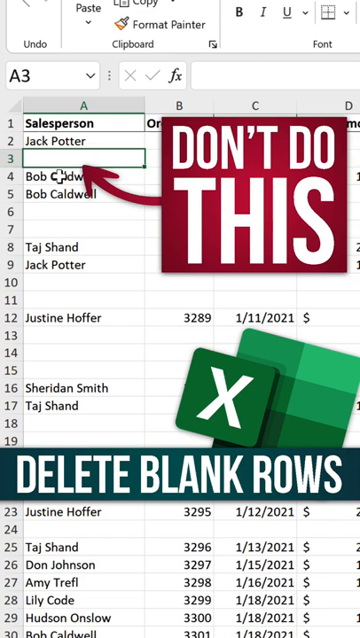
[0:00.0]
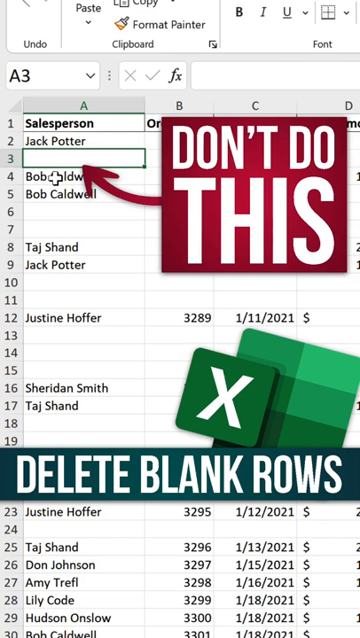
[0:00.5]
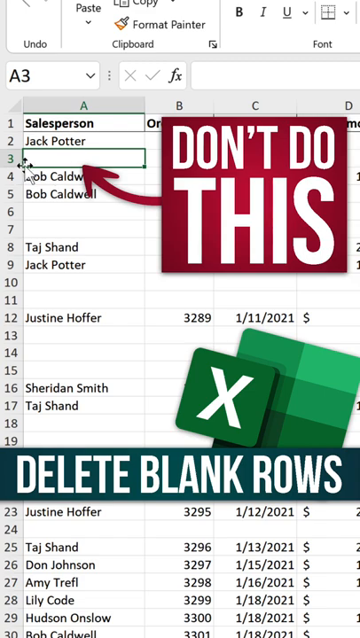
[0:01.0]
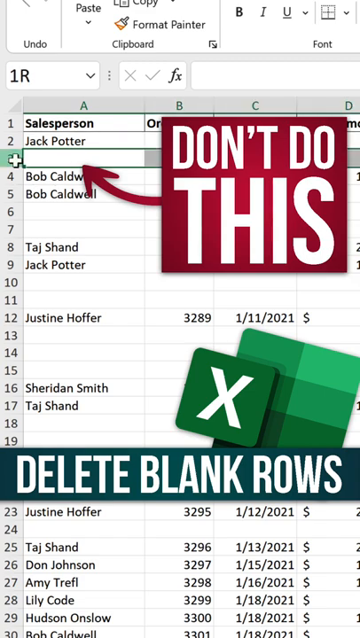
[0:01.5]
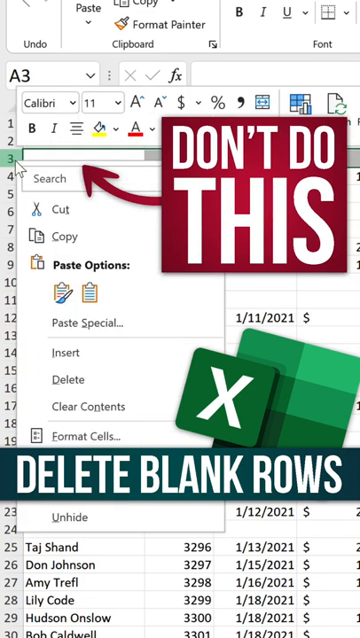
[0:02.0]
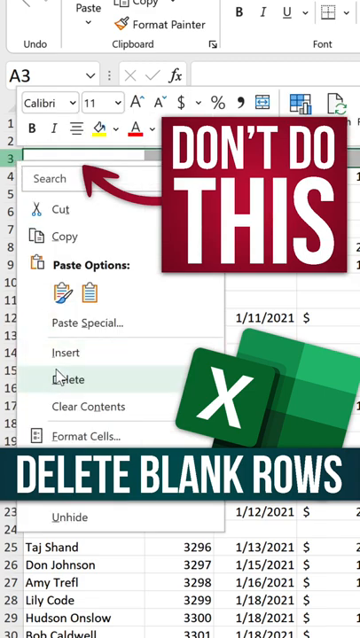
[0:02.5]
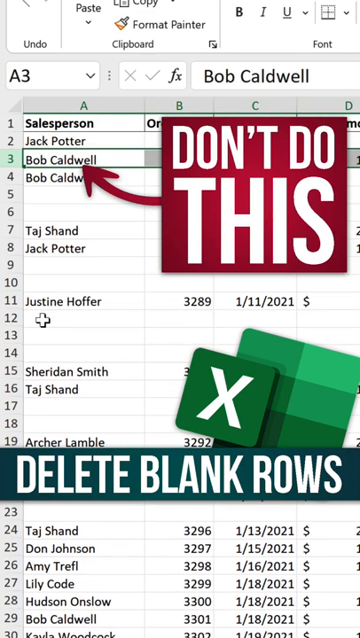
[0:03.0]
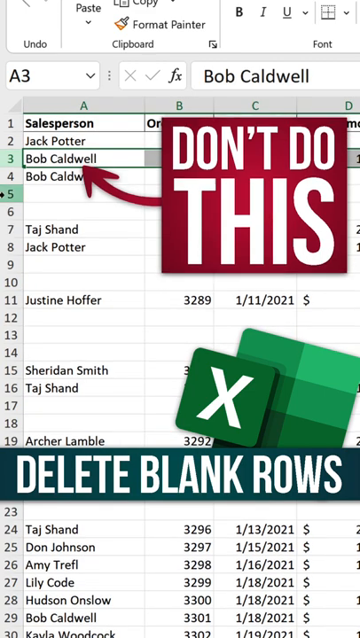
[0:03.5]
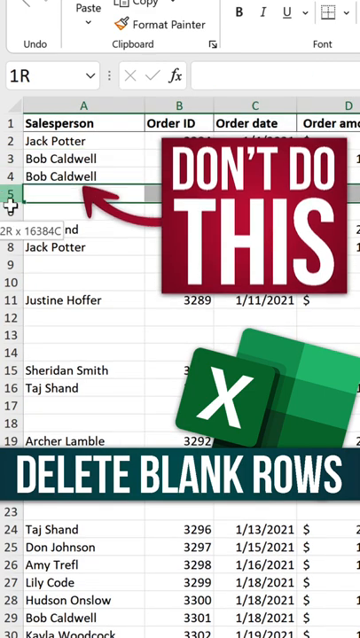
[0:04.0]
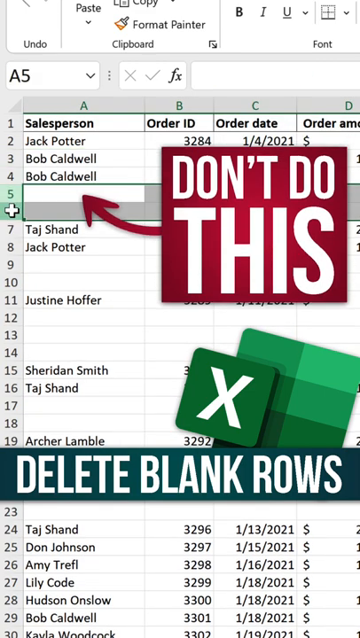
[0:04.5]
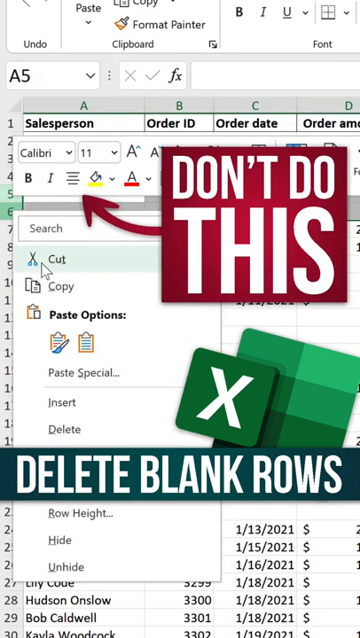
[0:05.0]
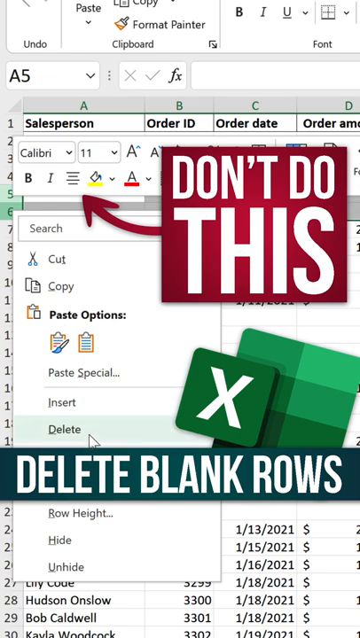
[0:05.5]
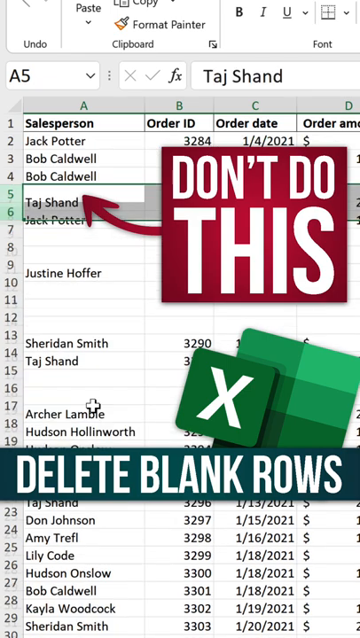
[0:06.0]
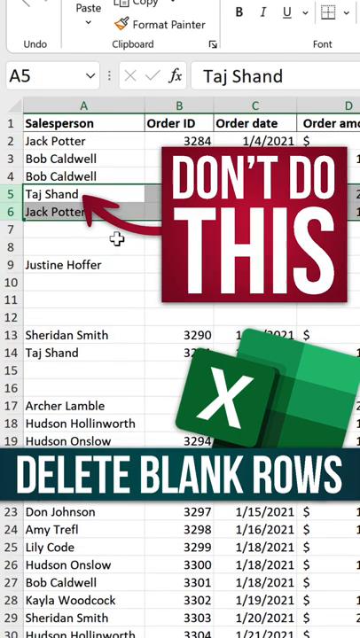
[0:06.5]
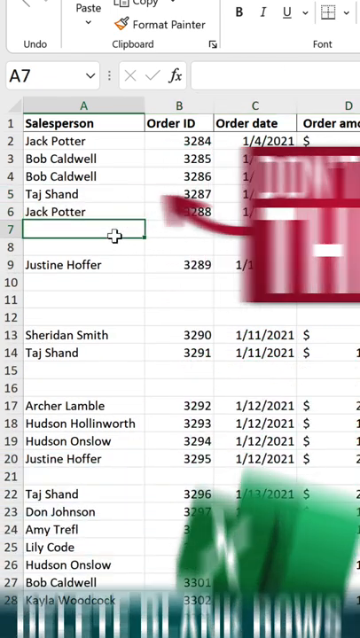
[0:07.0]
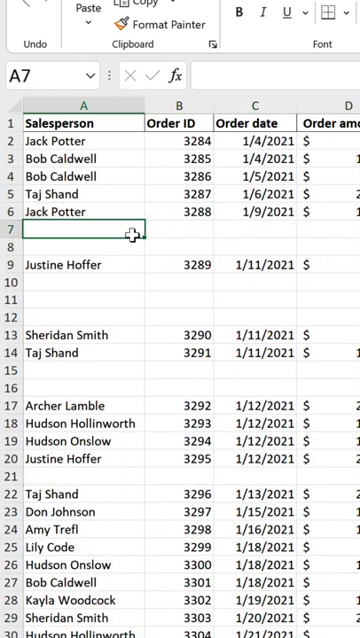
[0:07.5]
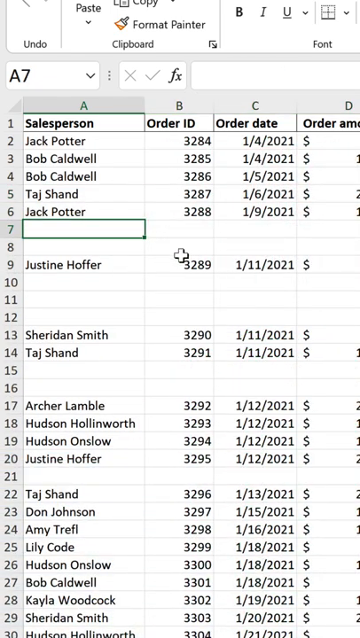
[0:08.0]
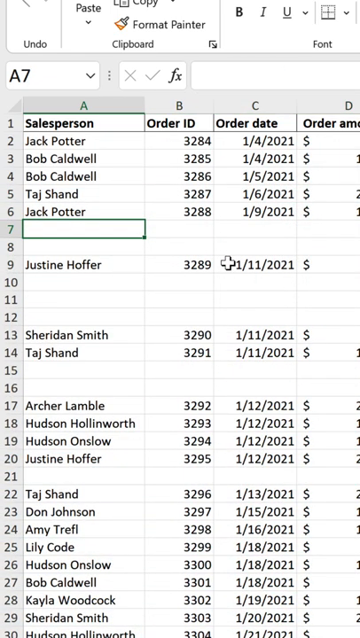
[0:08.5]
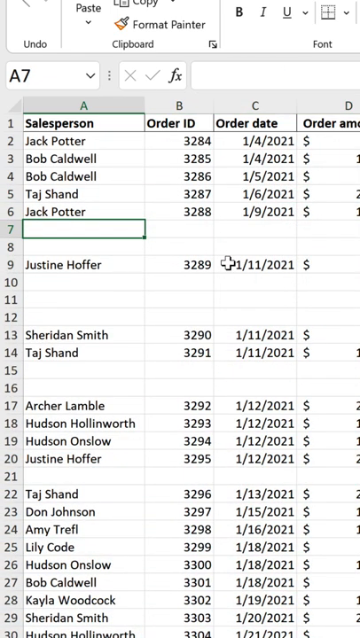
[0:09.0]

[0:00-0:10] Part of a DIY video for the program Microsoft Excel shows a spreadsheet in a vertical view from a mobile phone. A large red square contains the text "don't do this" in all capital letters and a very large font, and an arrow attached to the red box points to cell A3 on the spreadsheet. Toward the bottom middle of the video is a logo of the Microsoft Excel program along with a title line that says "delete blank rows". Column A contains names, column B contains numbers in order, column C contains a date, and column D contains a money symbol and numbers. The person then deletes the entire third row, as well as rows five and six, which were empty.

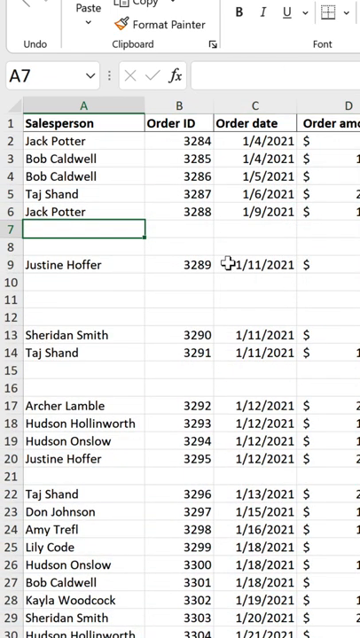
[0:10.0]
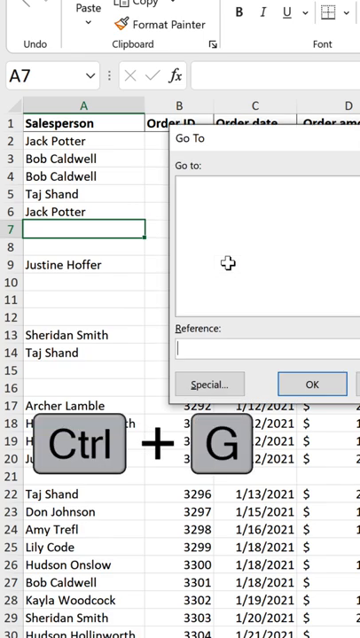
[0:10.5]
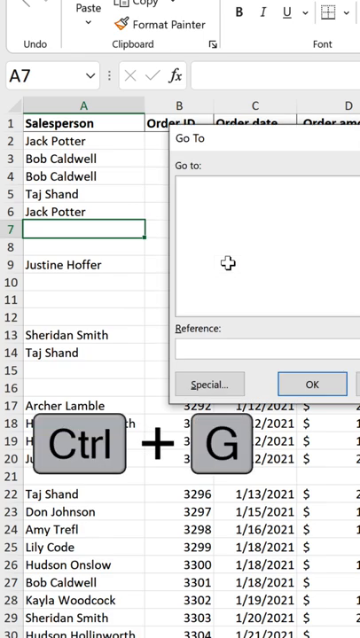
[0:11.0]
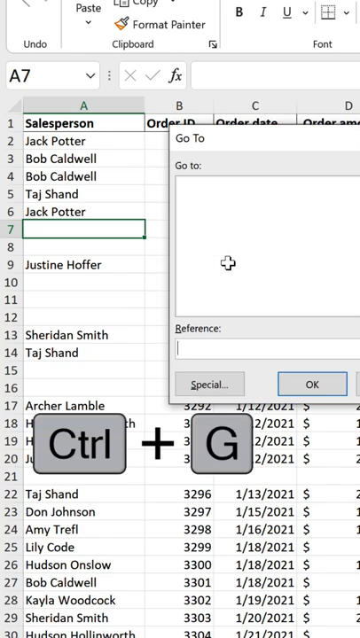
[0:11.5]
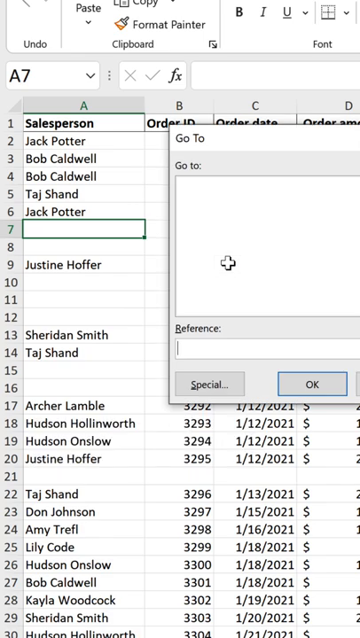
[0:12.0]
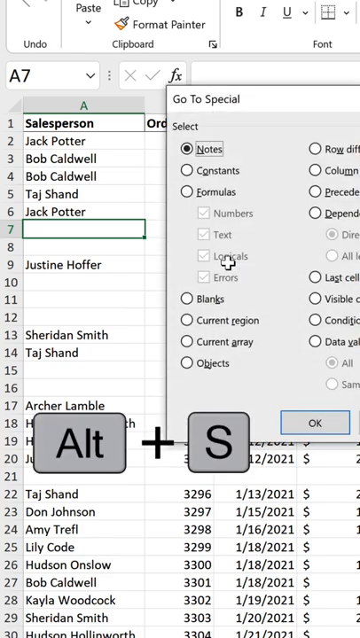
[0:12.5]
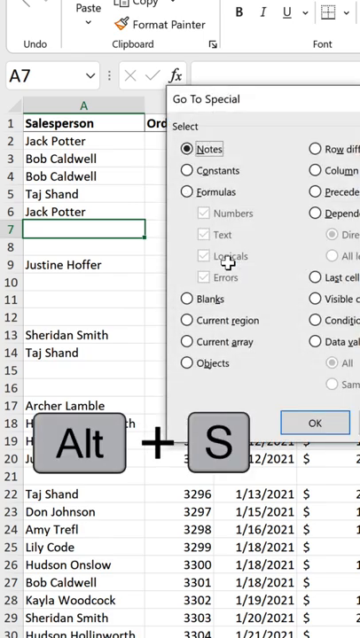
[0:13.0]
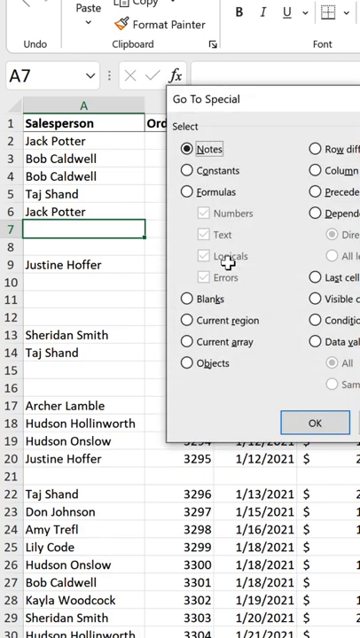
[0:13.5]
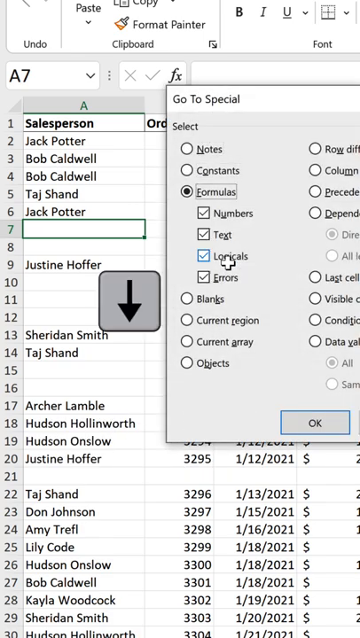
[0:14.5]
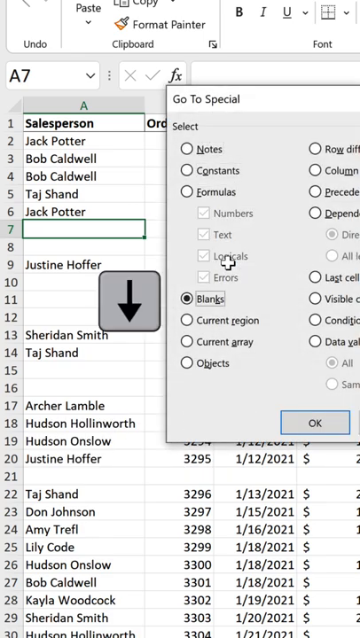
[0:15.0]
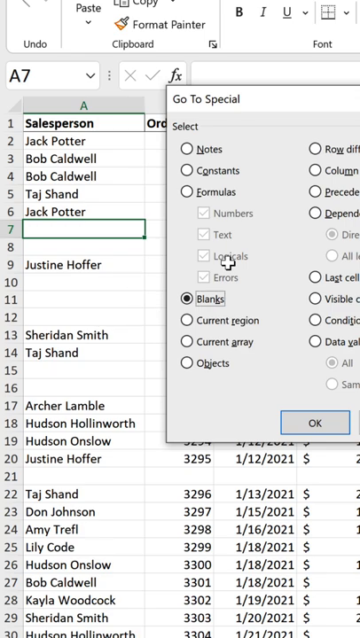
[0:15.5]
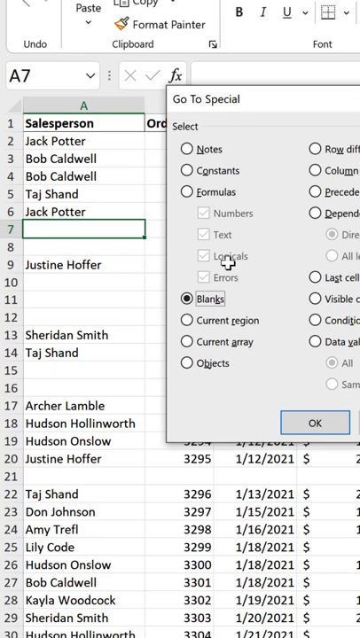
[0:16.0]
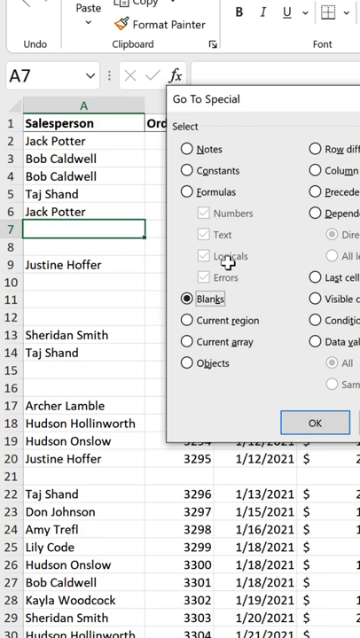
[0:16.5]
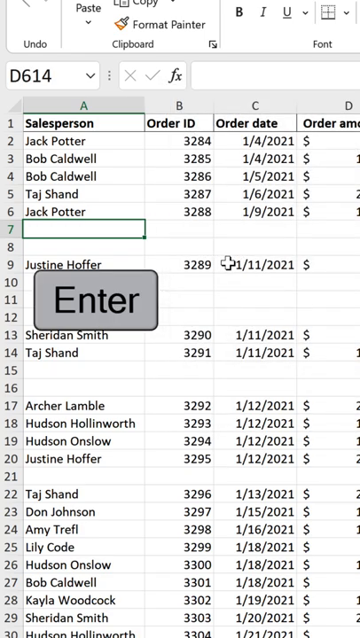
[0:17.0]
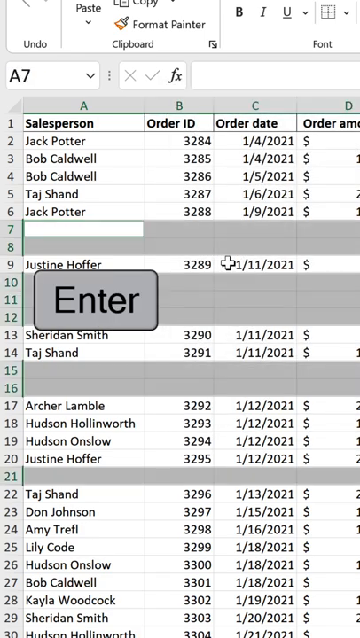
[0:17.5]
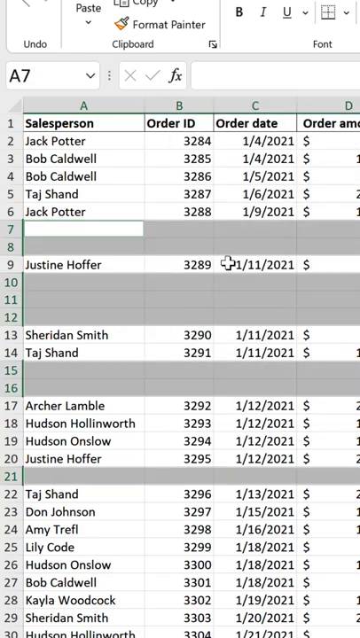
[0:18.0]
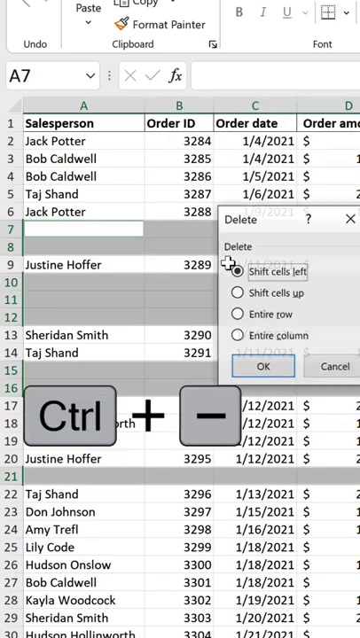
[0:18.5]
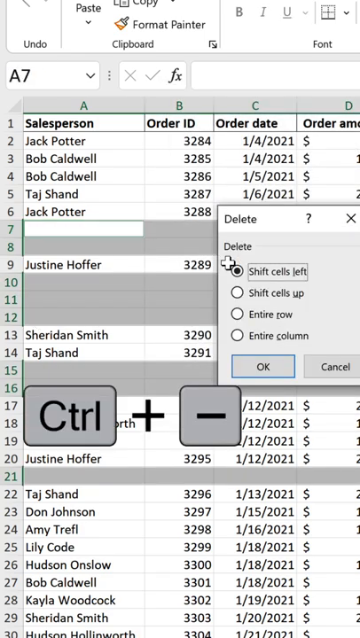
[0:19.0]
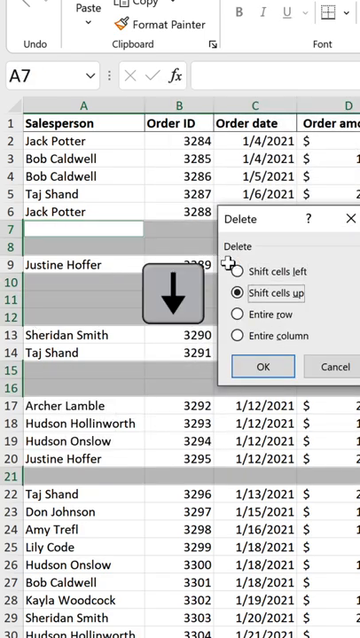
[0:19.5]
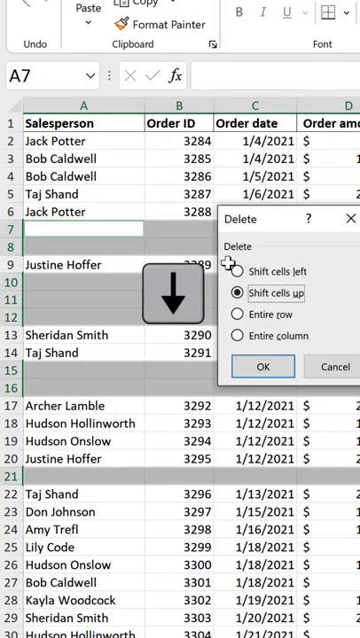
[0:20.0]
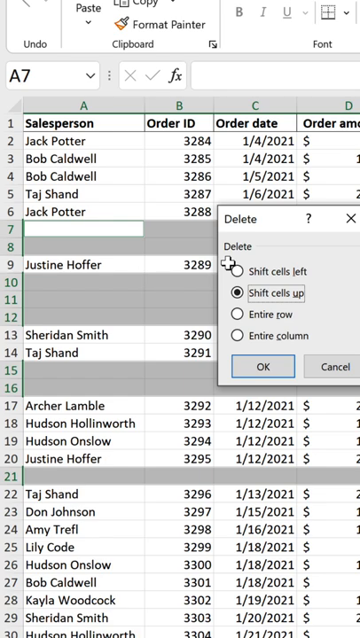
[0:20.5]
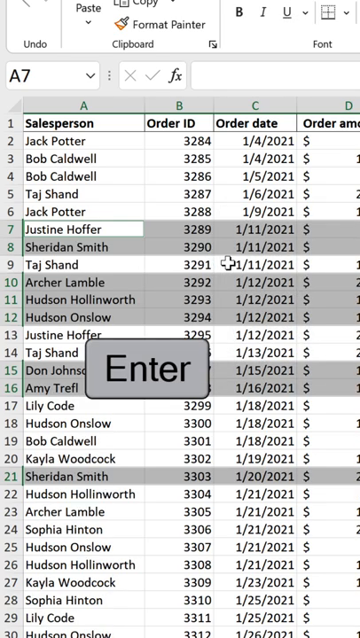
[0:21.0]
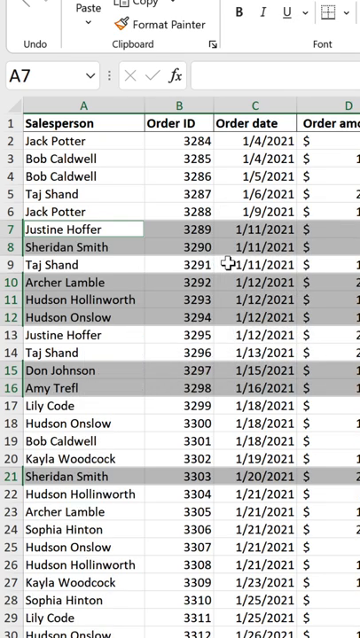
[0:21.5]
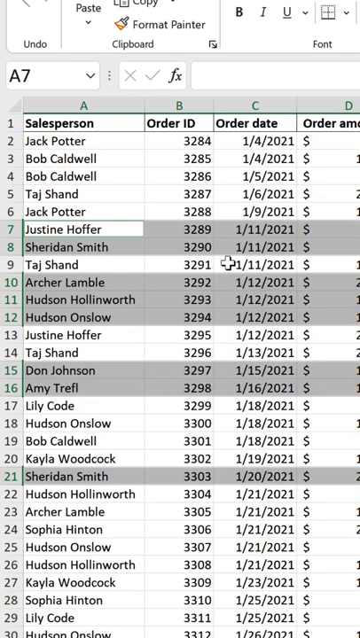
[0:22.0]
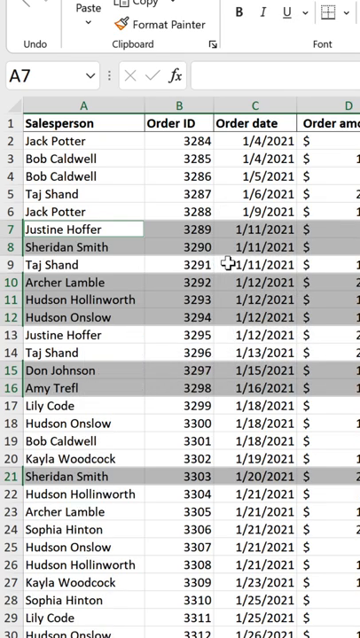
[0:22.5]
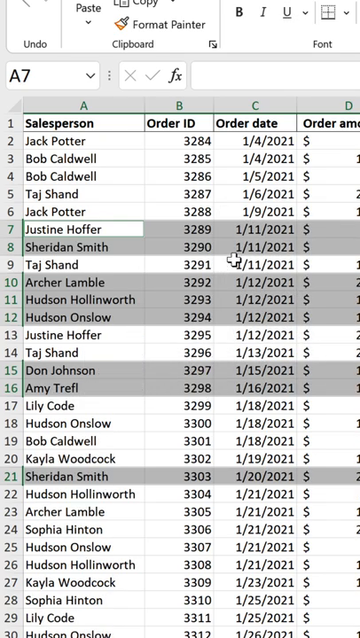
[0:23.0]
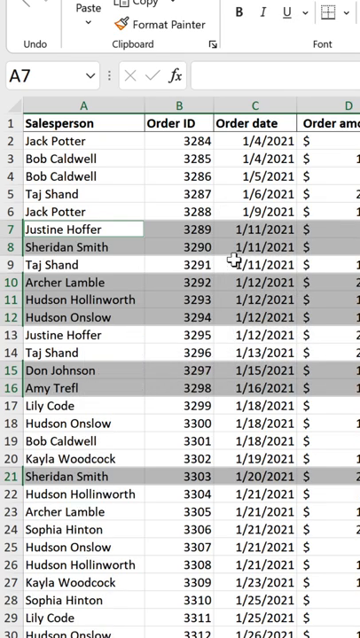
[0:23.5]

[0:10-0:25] A DIY of the program Microsoft Excel shows a spreadsheet in a vertical view from a mobile smartphone. Column A shows names of salespeople, column B shows the order ID with the numbers in order, column C has the order date, and column D has the order amount with a dollar sign. A pop-up window titled "Go to Special" appears, along with two buttons in the middle of the screen indicating that the user should press Alt and S. A down arrow is shown to indicate which option to pick, followed by the word "Enter". Next, the Ctrl button and the minus button appear along with a pop-up window that says "delete". A down arrow indicates which setting the viewer should pick, followed by the Enter button. All of the blank spaces on the Excel worksheet are then removed, with no spaces left behind.